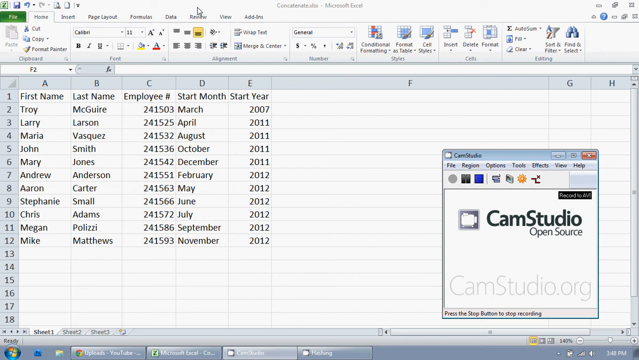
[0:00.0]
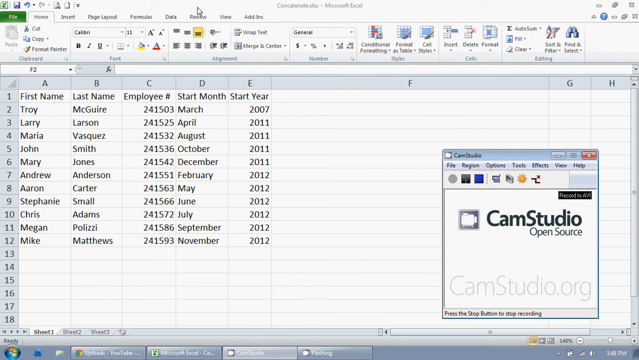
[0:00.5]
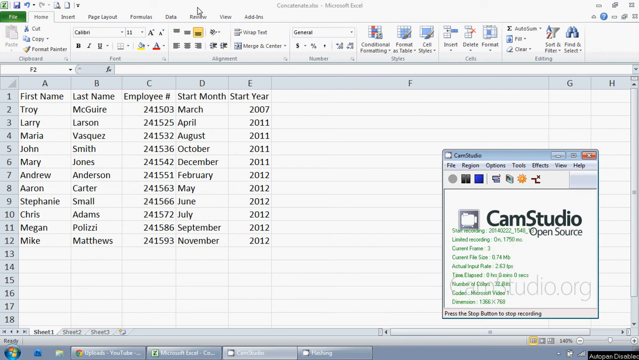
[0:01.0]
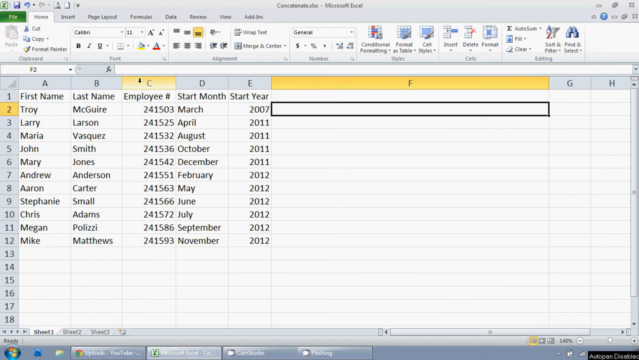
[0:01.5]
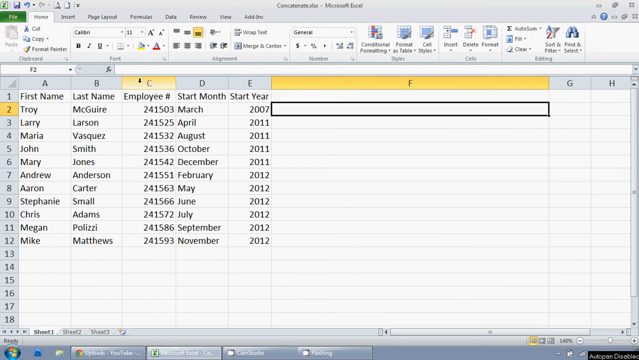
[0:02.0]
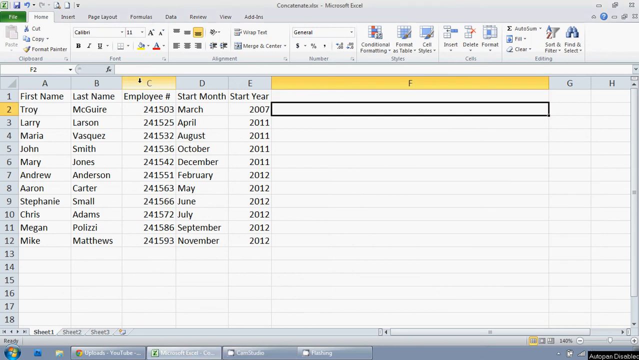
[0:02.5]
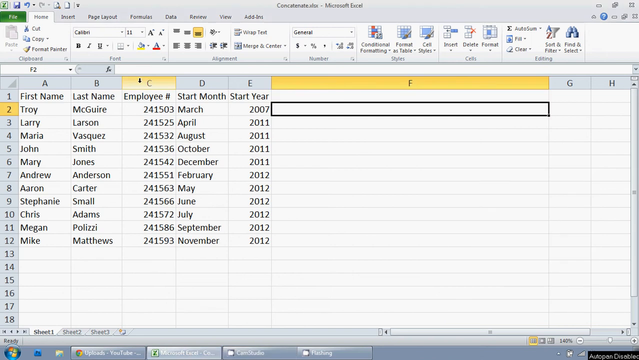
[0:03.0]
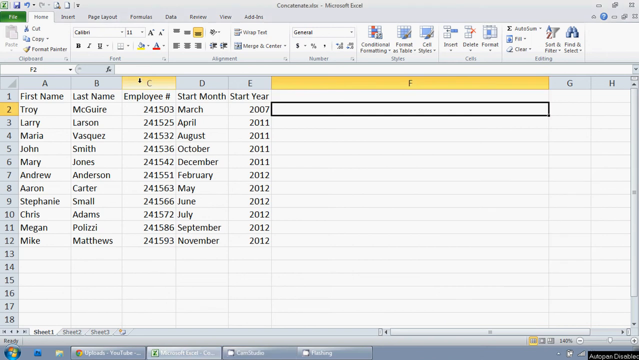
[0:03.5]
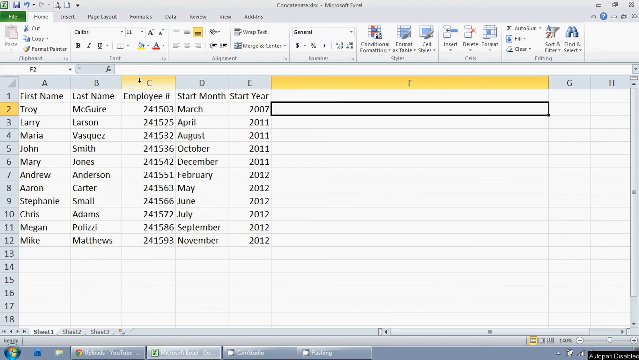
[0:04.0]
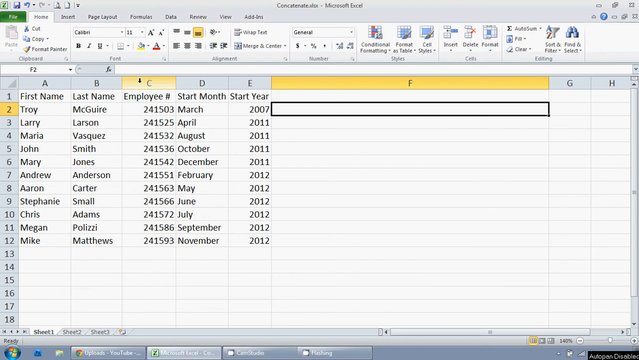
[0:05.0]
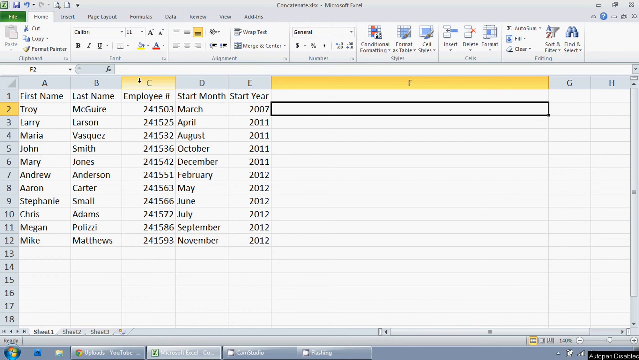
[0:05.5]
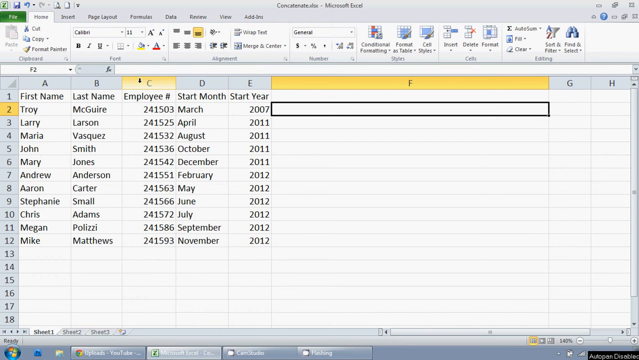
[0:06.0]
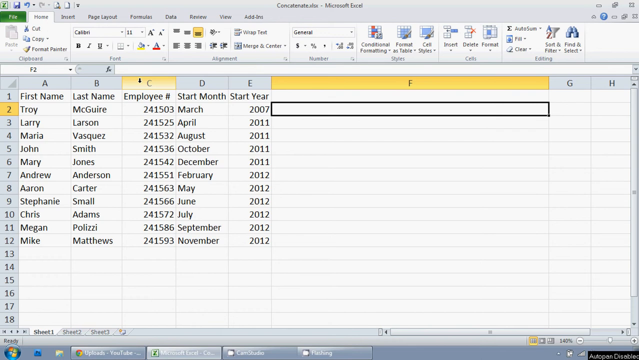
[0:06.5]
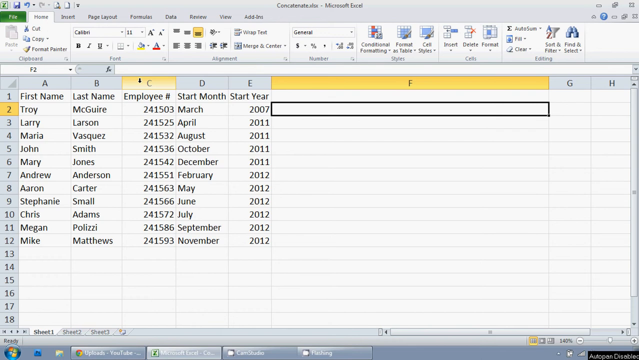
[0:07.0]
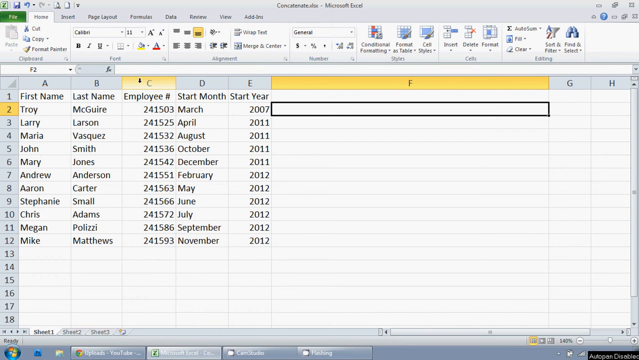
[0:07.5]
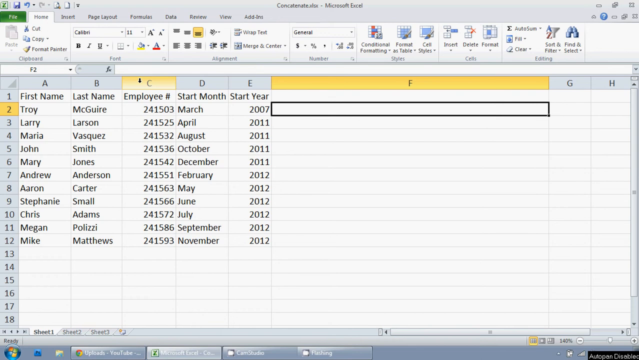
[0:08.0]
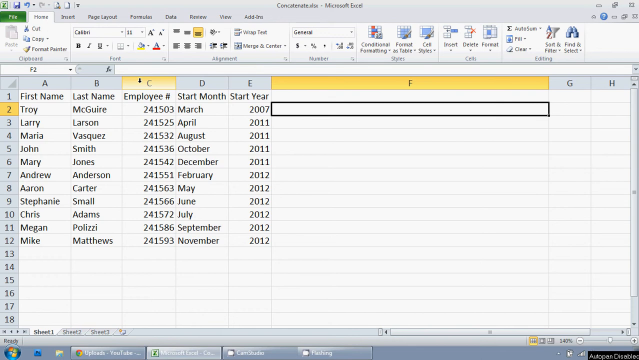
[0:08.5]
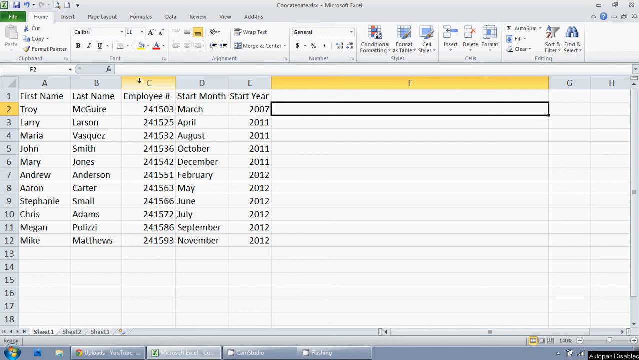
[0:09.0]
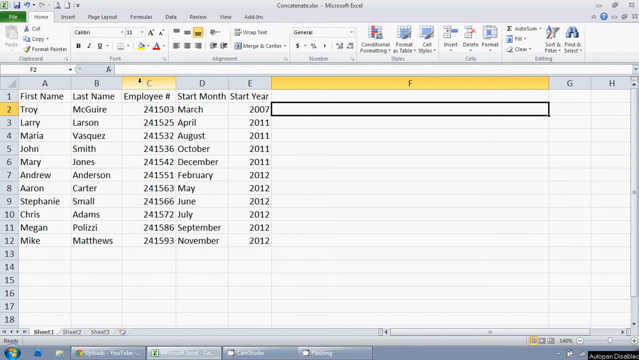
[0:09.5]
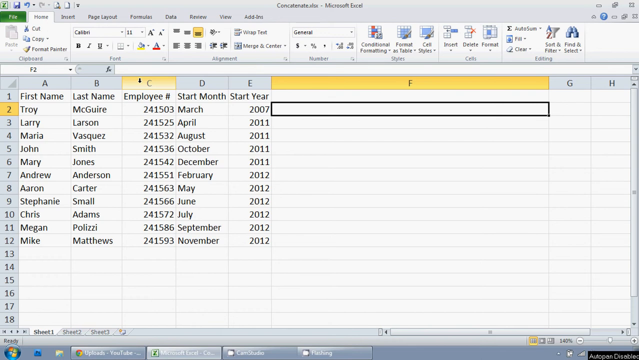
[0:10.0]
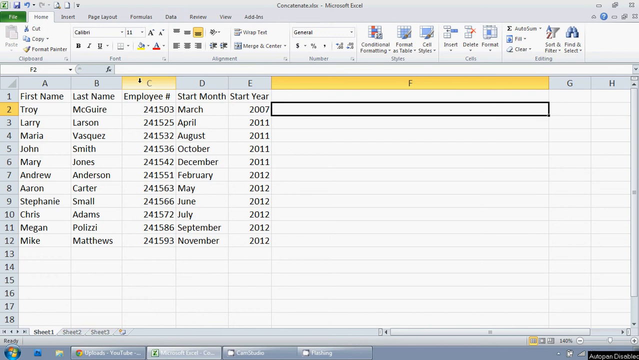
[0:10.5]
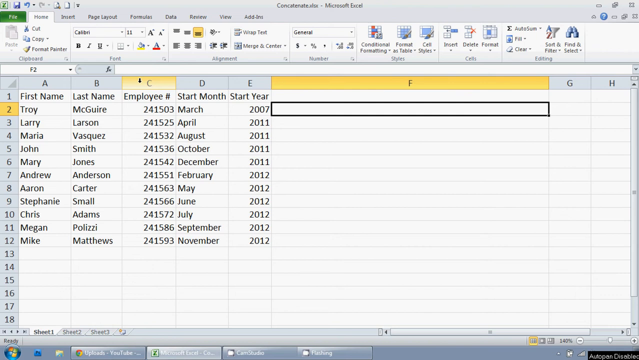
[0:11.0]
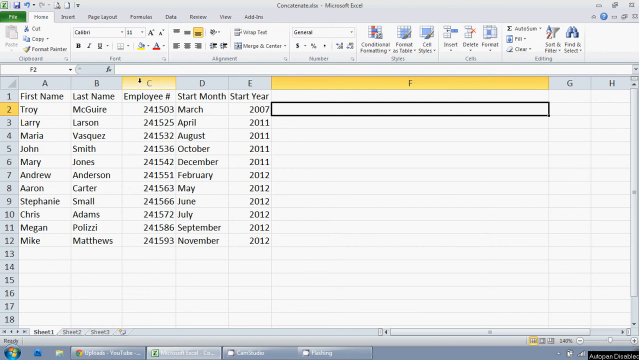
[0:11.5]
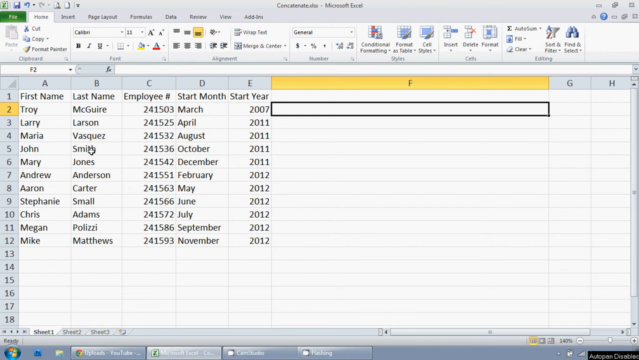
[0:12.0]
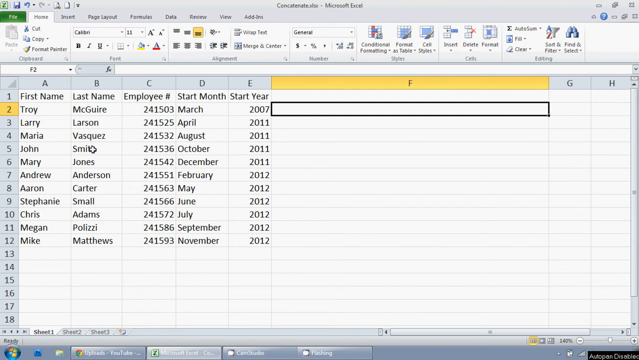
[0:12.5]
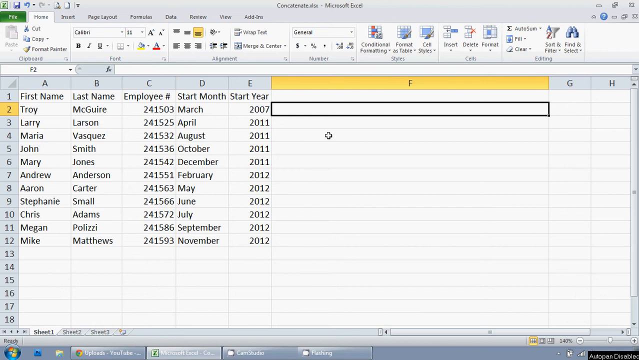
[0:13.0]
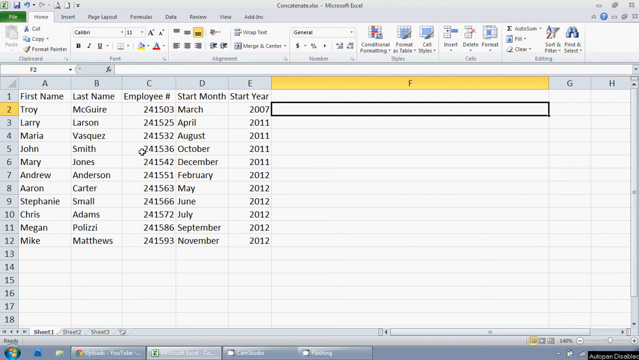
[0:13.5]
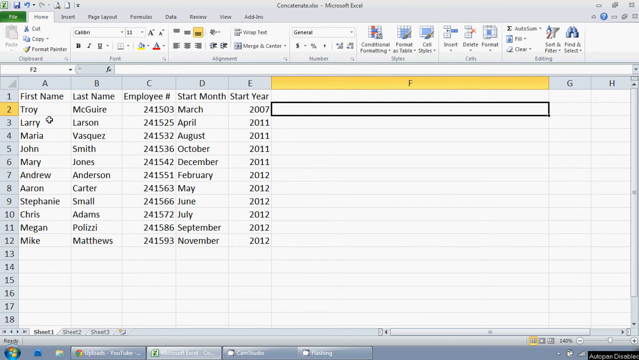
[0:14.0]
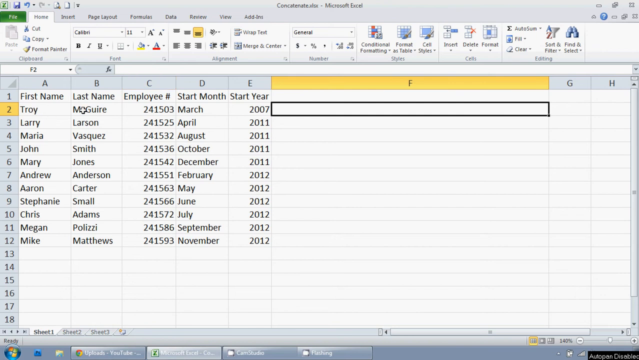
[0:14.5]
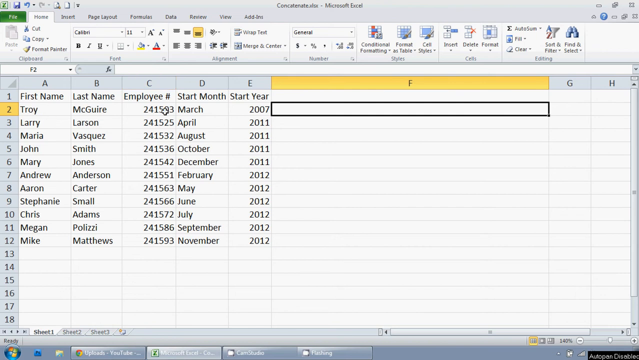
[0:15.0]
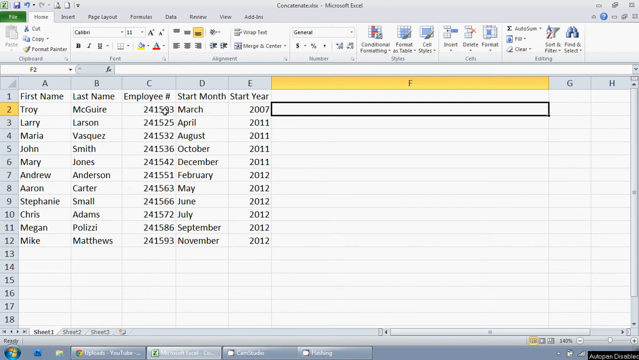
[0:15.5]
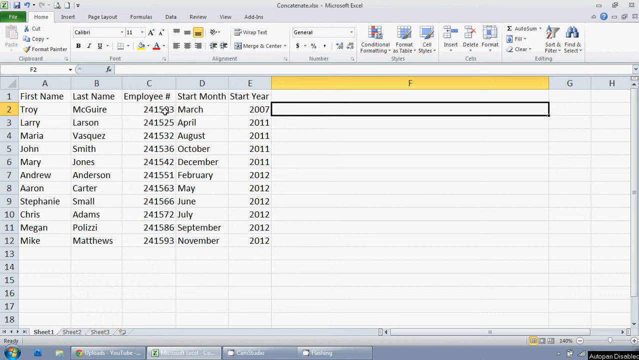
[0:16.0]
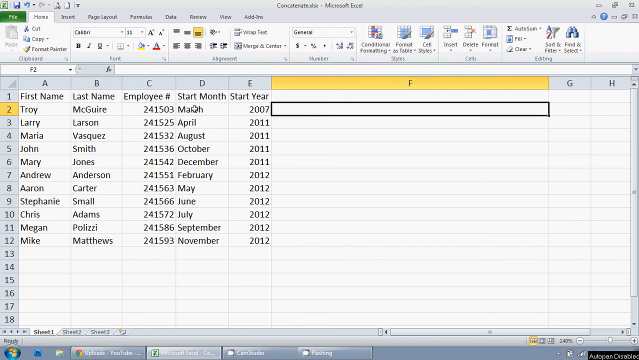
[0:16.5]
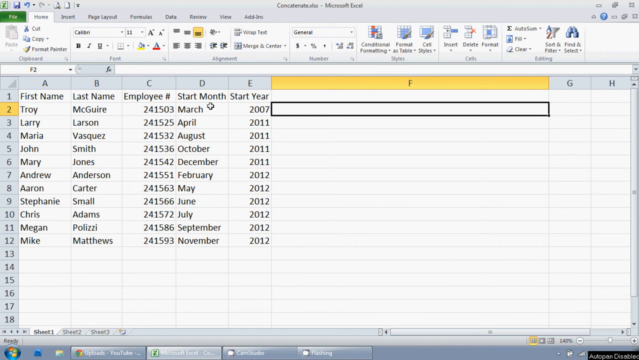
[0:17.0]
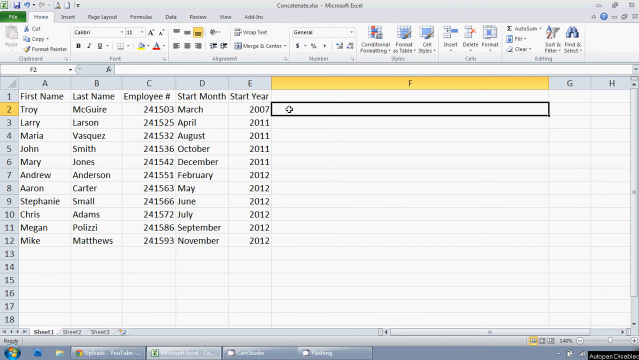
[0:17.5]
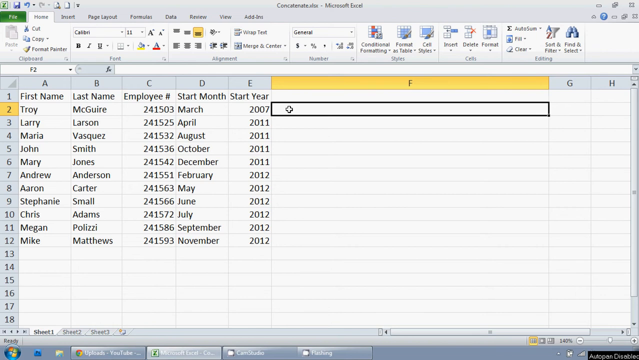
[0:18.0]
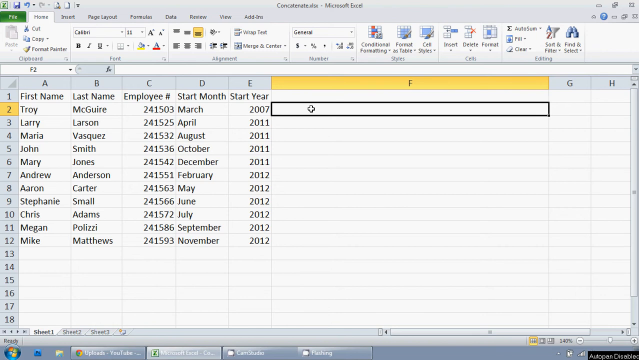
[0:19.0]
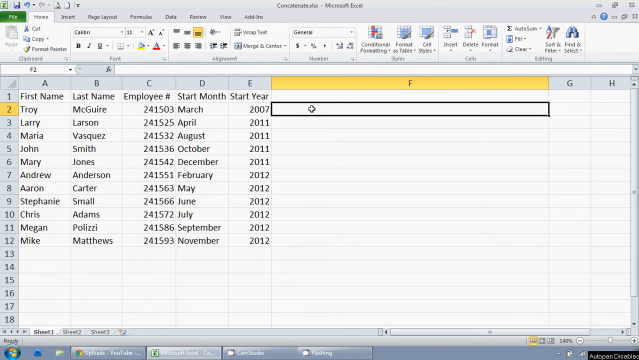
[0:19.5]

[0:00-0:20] This appears to be a tutorial on how to use Excel. The video opens on an Excel page. In the lower right corner of the screen there is a separate small page with "Camstudio open source" written on it, along with some very small green text that is too small to make out; this small page disappears quickly. Twelve rows and five columns of content have been entered into the spreadsheet, including first name, last name, employee number, start month, and start year. The mouse selects the second row in column F, and the cursor changes to a cross shape. The mouse moves across the Excel page, and the selected column has a black border. The screen remains in this state for a long time.